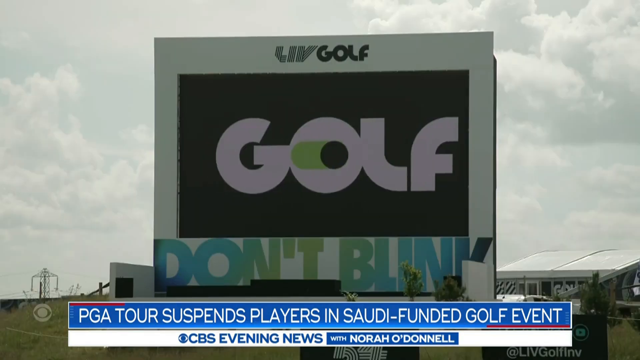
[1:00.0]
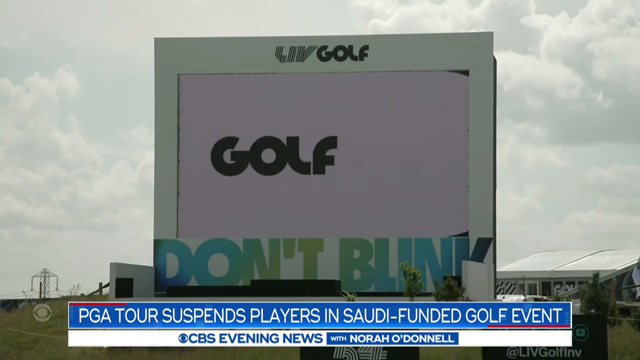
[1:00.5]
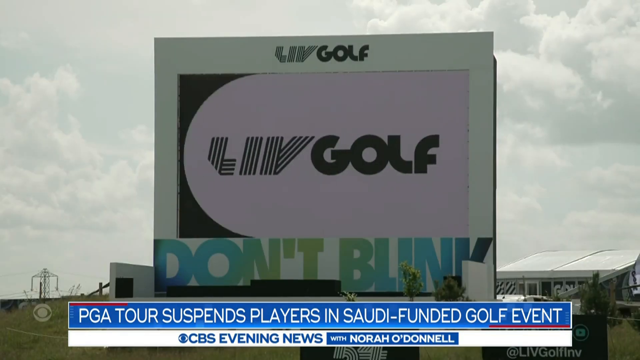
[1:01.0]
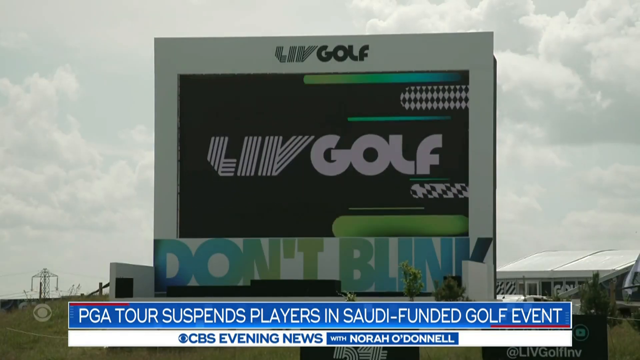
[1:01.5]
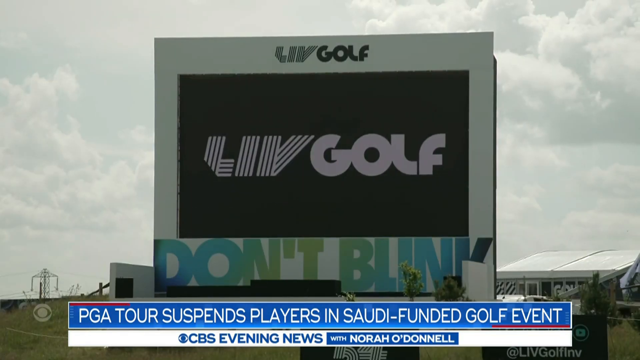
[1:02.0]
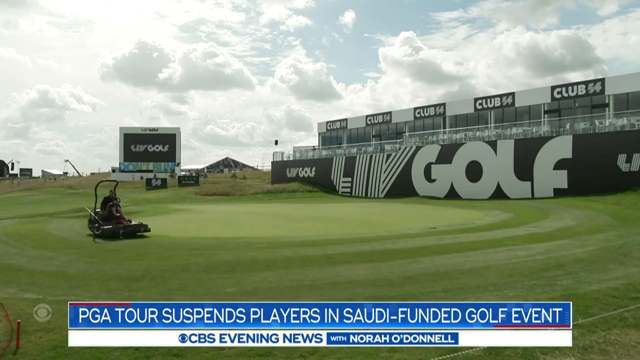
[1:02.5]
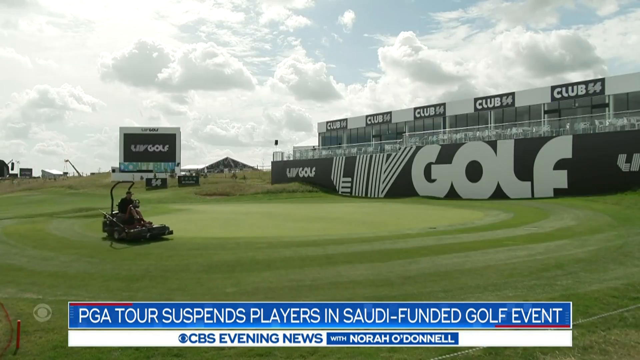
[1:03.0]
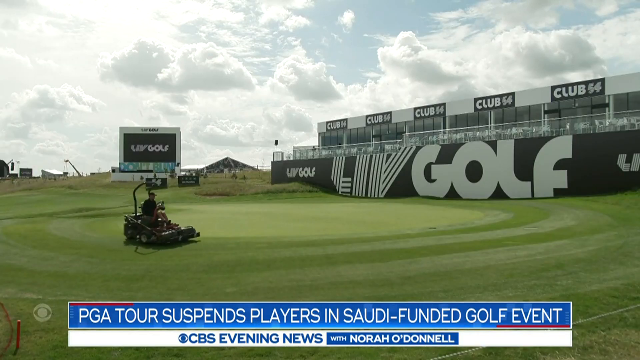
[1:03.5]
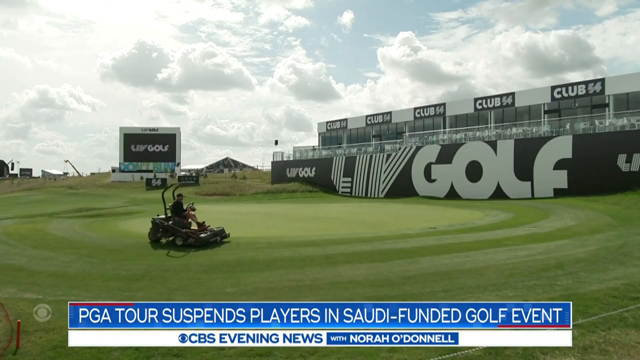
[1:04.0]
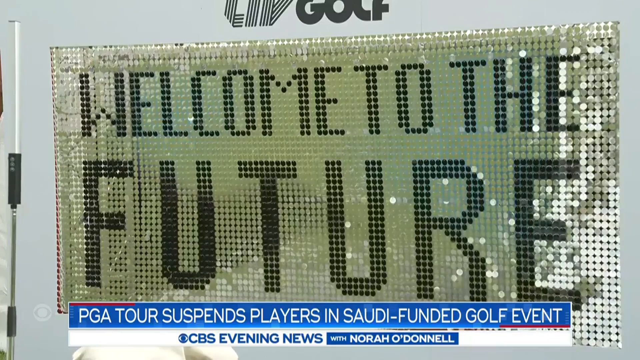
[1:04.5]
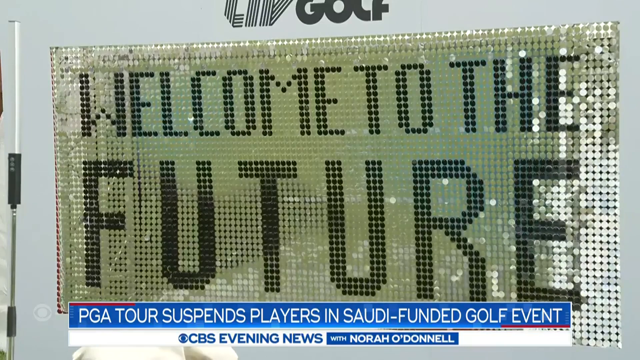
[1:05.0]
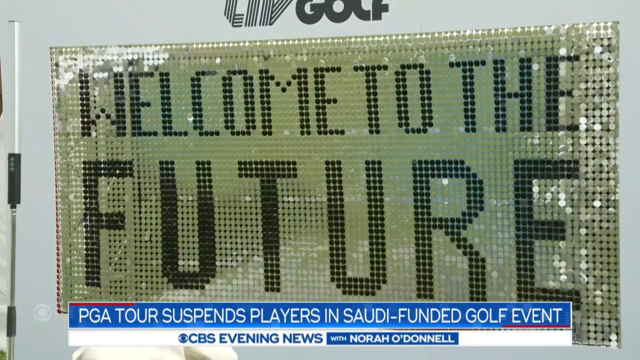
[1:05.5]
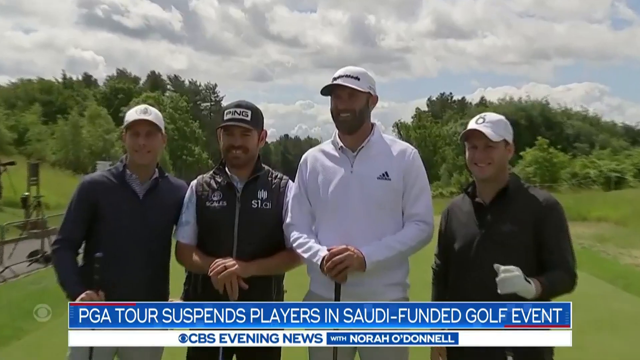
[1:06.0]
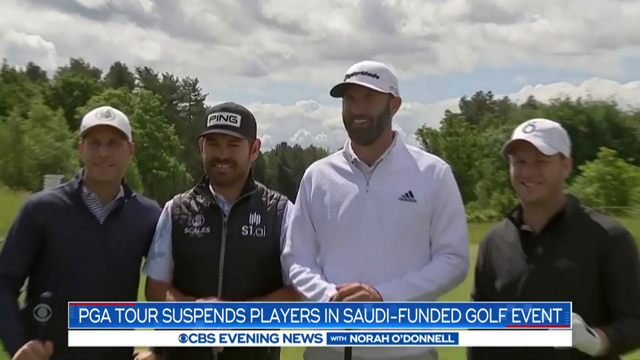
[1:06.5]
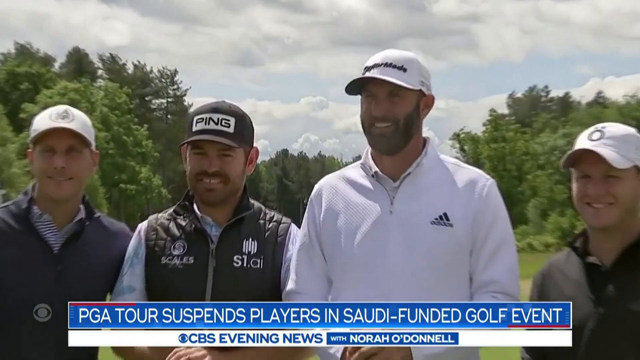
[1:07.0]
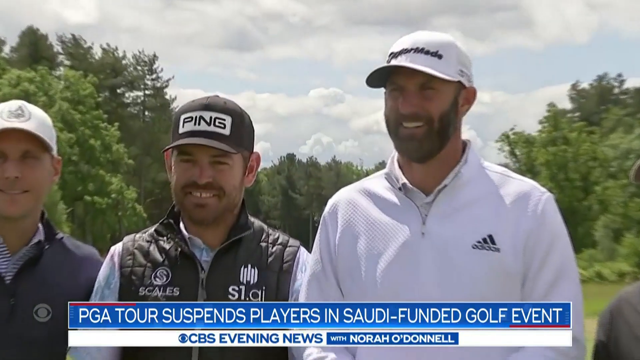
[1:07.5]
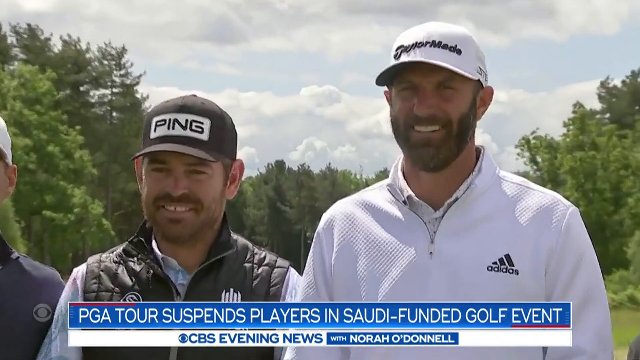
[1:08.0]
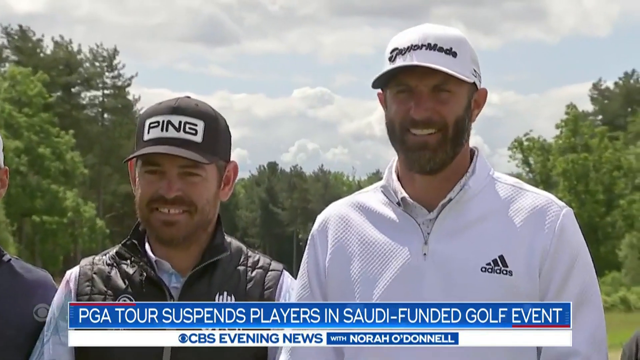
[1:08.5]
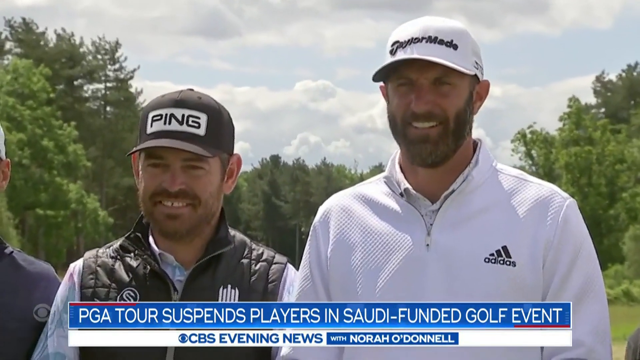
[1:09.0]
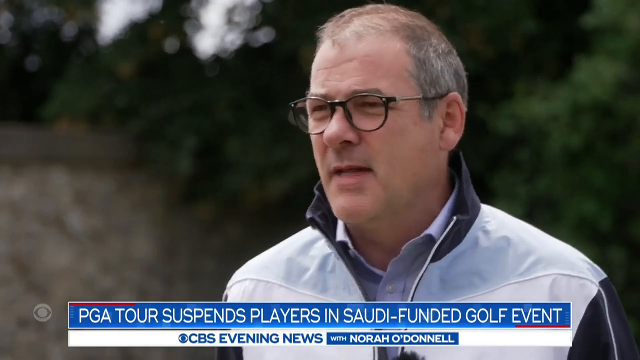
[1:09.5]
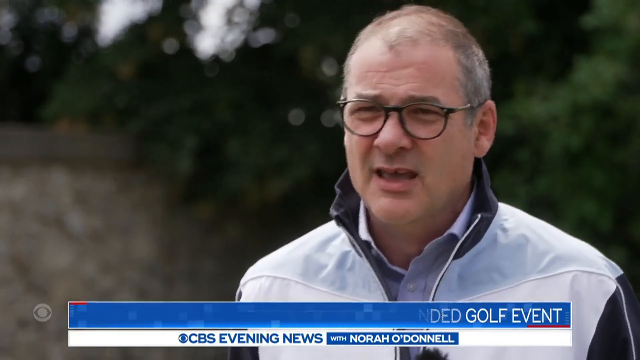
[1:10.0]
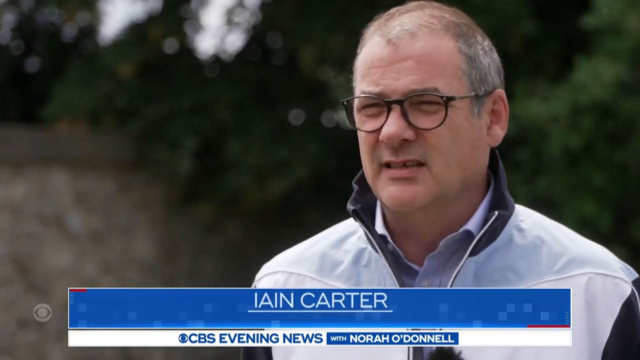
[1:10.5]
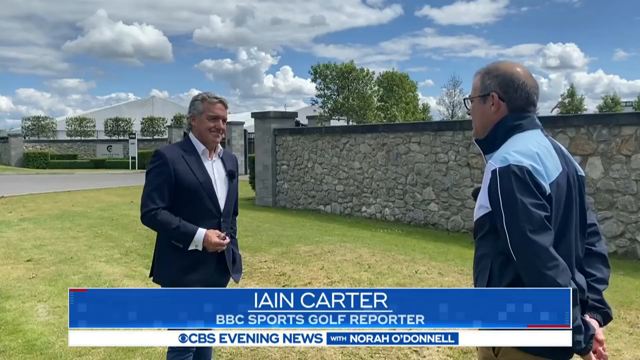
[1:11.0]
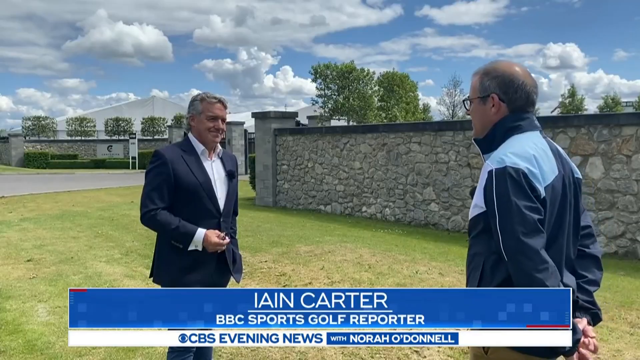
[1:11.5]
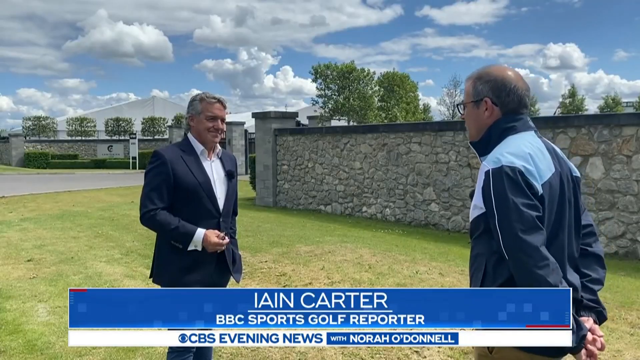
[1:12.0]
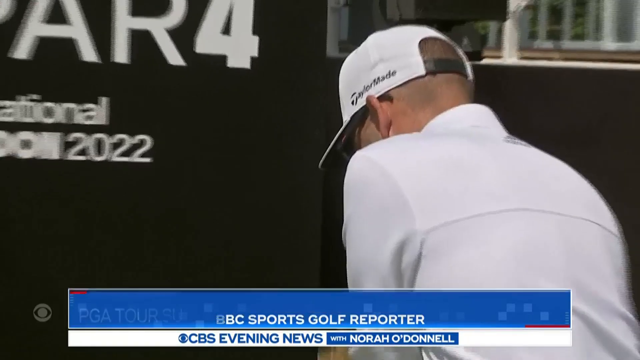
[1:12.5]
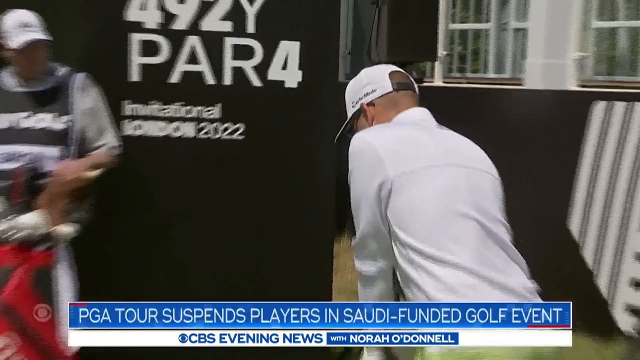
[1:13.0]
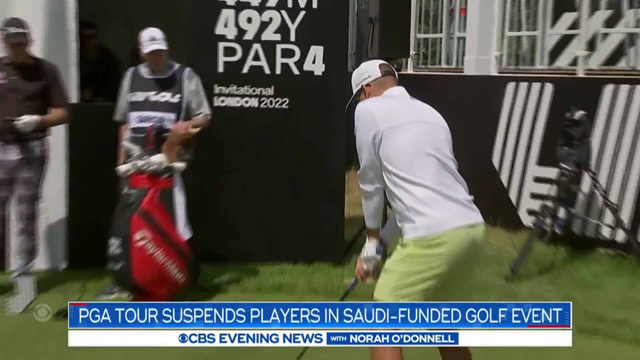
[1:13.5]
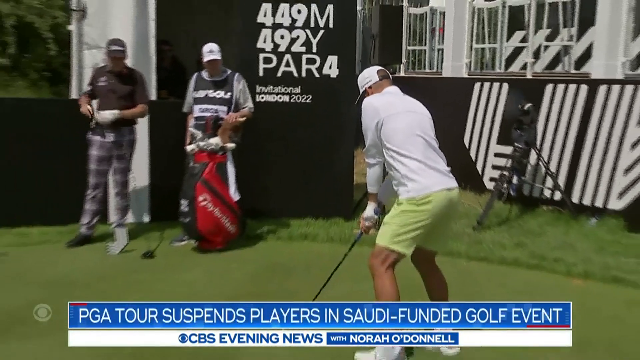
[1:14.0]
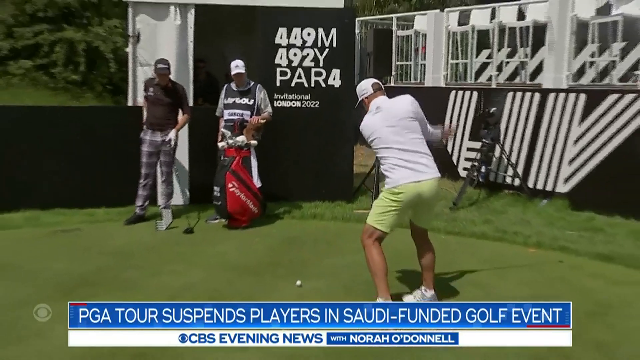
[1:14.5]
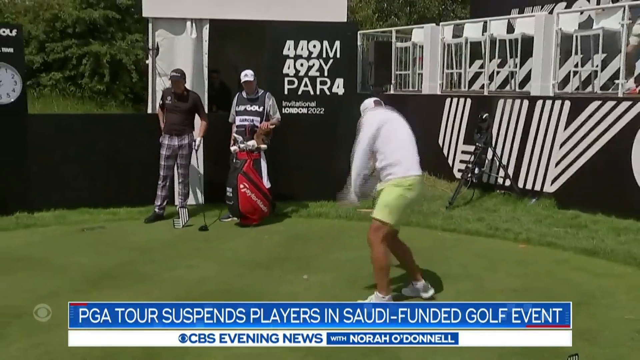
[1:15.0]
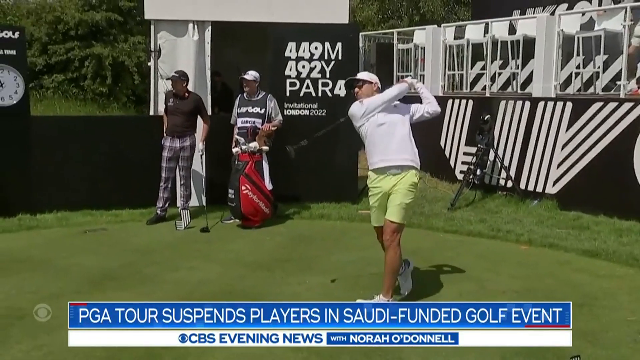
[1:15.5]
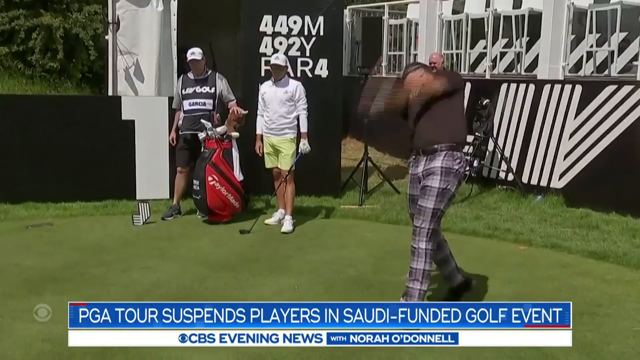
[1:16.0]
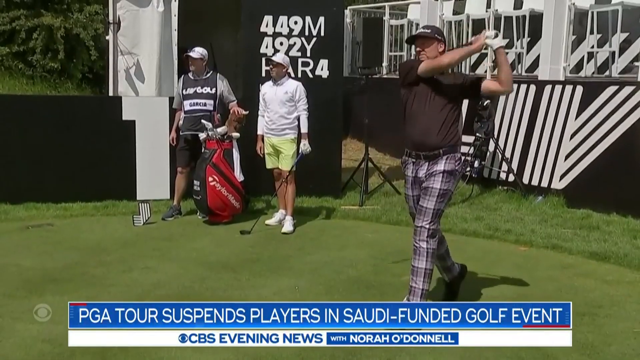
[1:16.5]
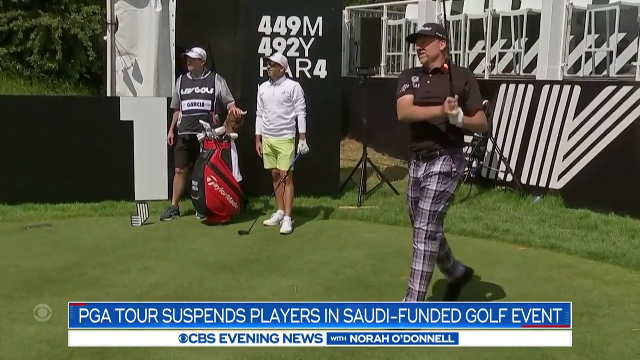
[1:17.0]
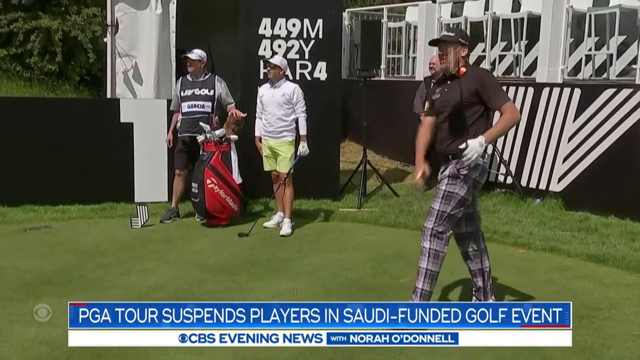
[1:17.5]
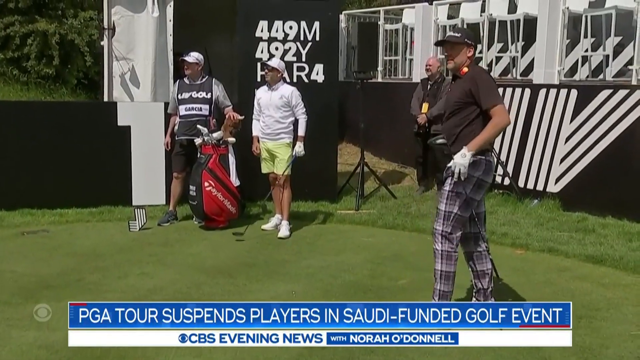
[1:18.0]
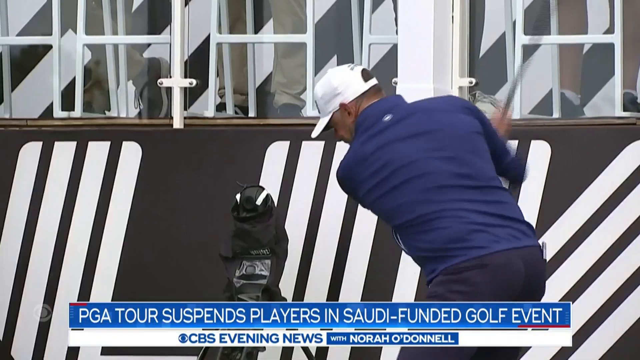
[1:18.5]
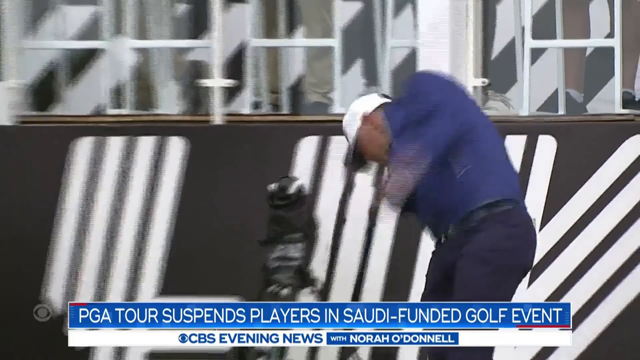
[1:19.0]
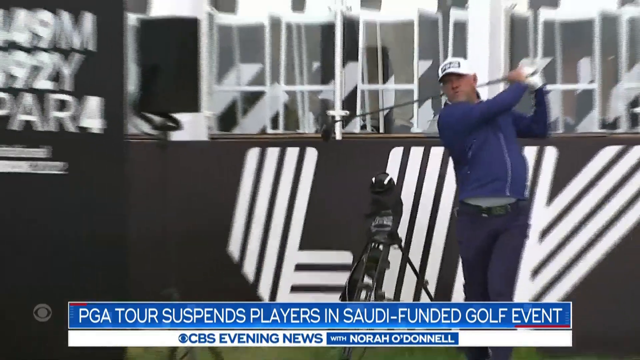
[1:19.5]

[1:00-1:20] The CBS Evening News with Nora O'Donnell story continues with a title bar along the bottom of the screen. Its blue background carries the story title in white writing, reading "PGA TOUR SUSPENDS PLAYERS IN SAUDI FUNDED GOLF TOURNAMENT", and underneath, in blue lettering on a white background, is the channel information with the CBS logo. The shot opens on a digital Live Golf display reading "Welcome to the future". It then cuts to Ian Carter, BBC sports golf reporter, whose name is shown in the title bar; he is standing on a green lawn with a stone wall behind him, greeting someone else. Next, the tournament is shown, with golfers standing near black and white stands hitting the golf ball from the tee.